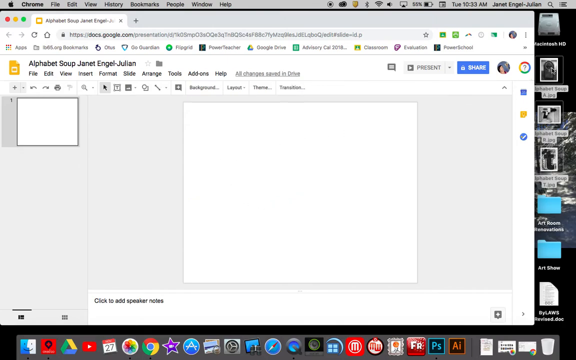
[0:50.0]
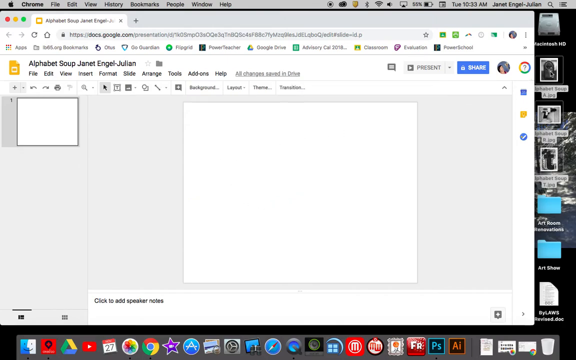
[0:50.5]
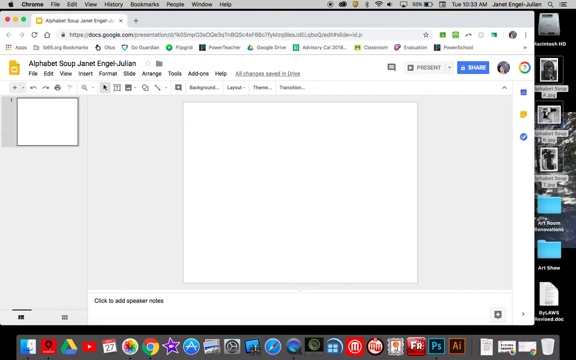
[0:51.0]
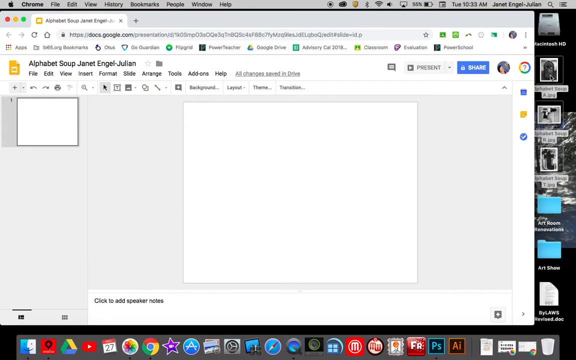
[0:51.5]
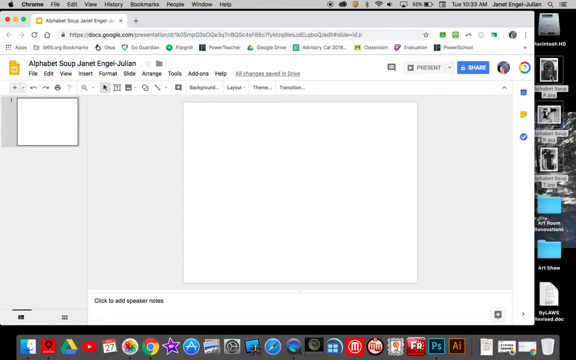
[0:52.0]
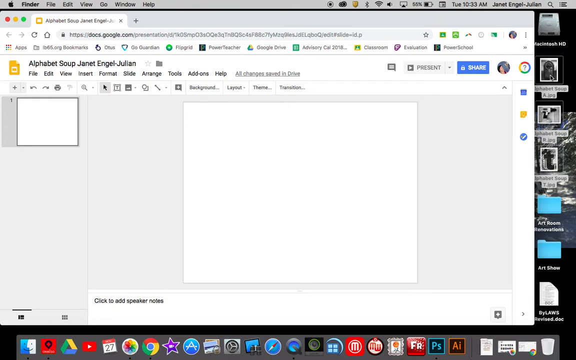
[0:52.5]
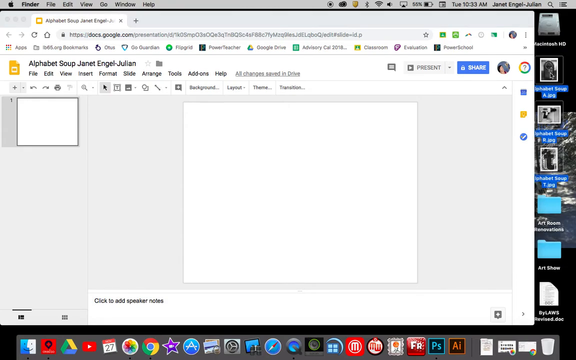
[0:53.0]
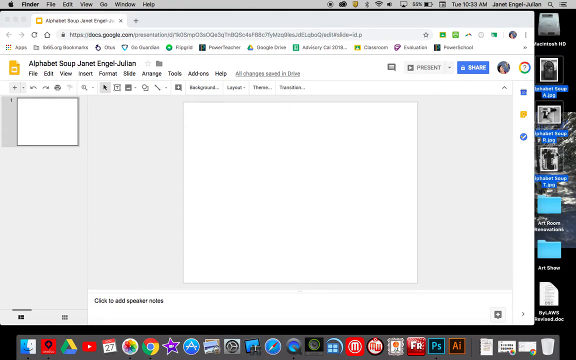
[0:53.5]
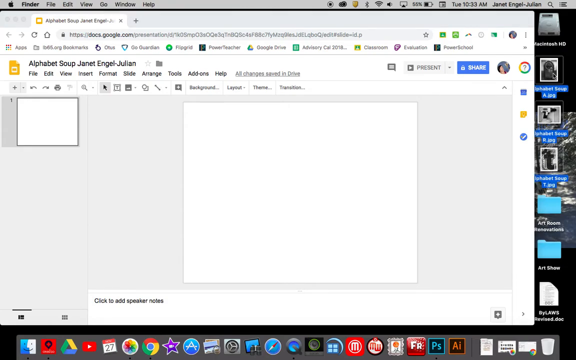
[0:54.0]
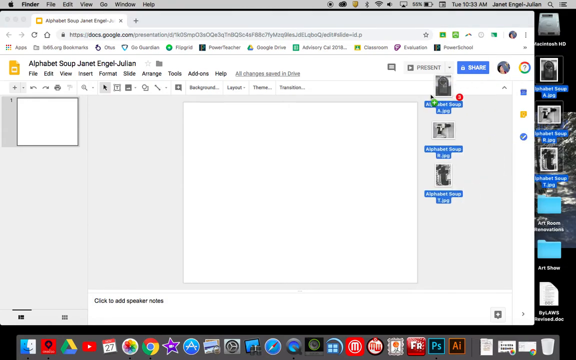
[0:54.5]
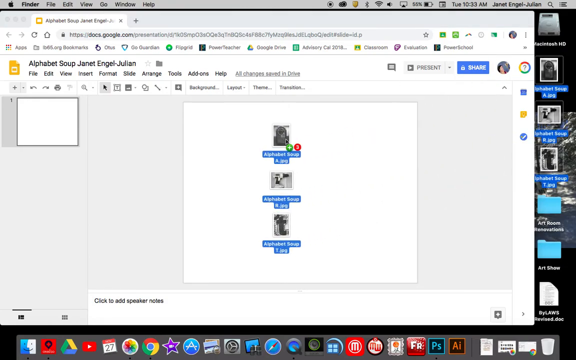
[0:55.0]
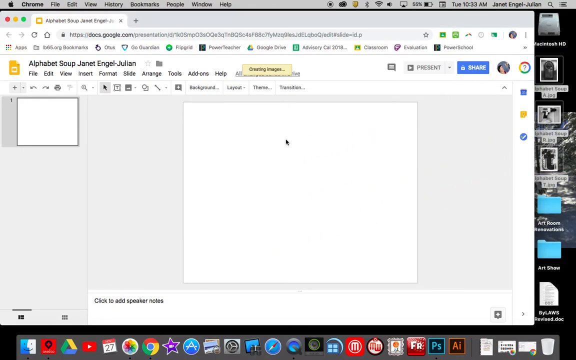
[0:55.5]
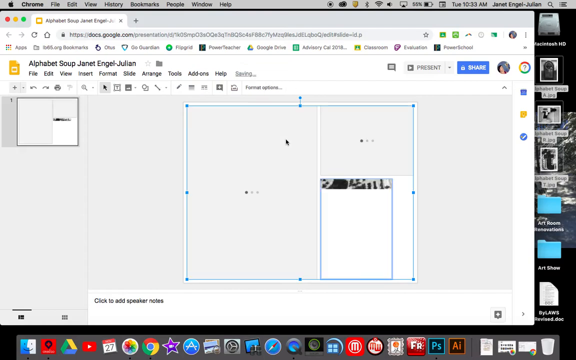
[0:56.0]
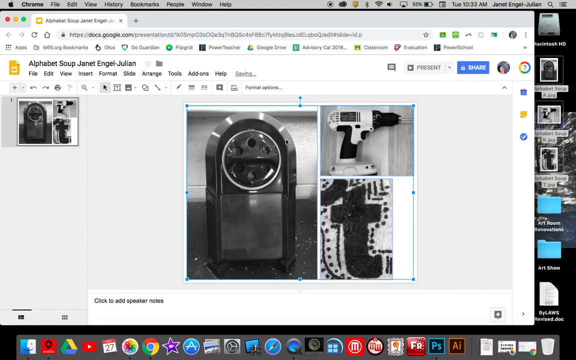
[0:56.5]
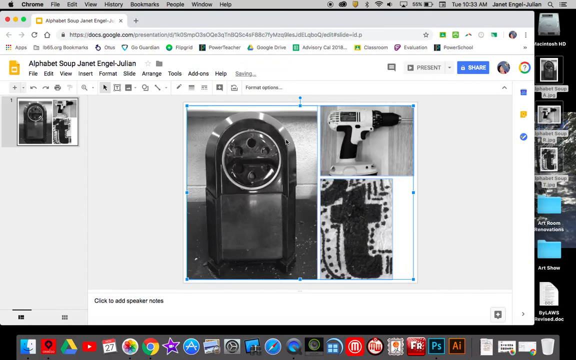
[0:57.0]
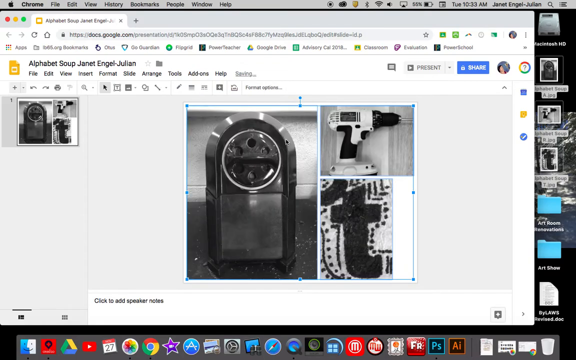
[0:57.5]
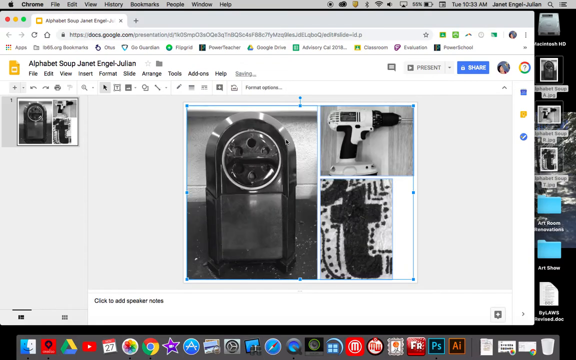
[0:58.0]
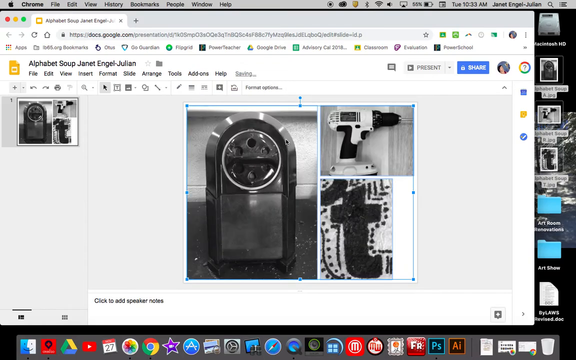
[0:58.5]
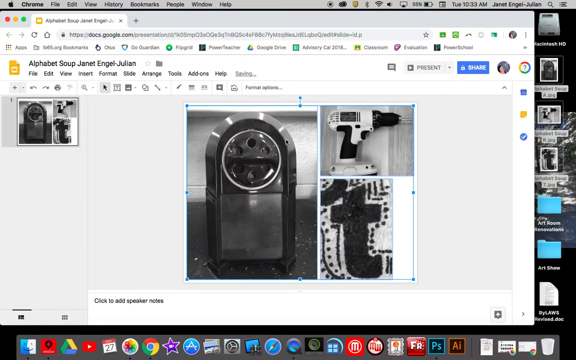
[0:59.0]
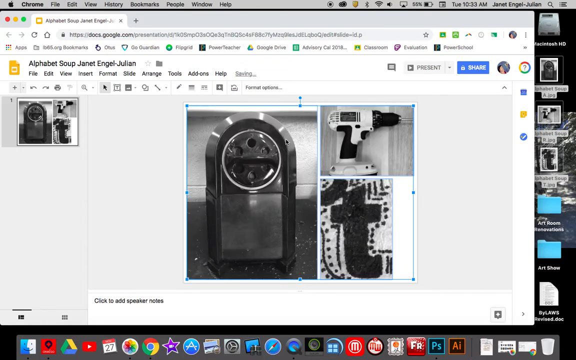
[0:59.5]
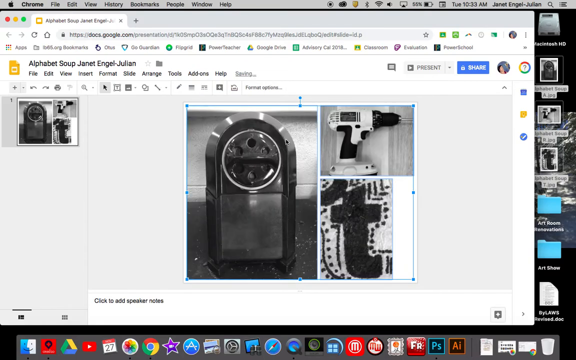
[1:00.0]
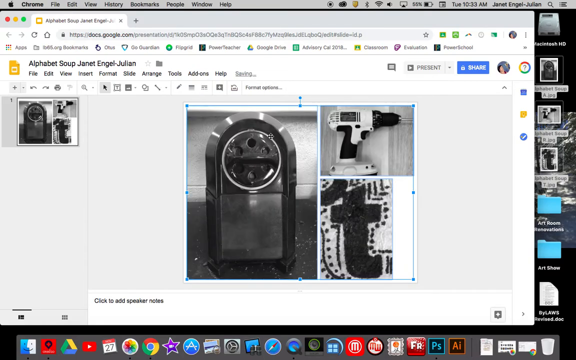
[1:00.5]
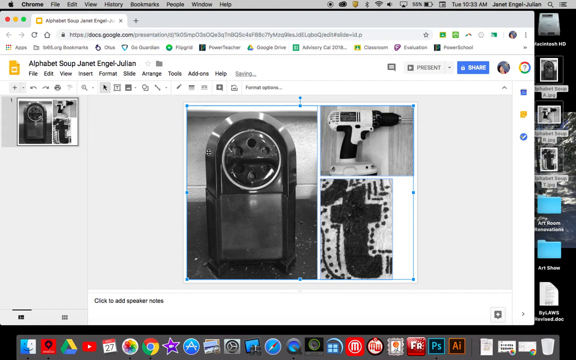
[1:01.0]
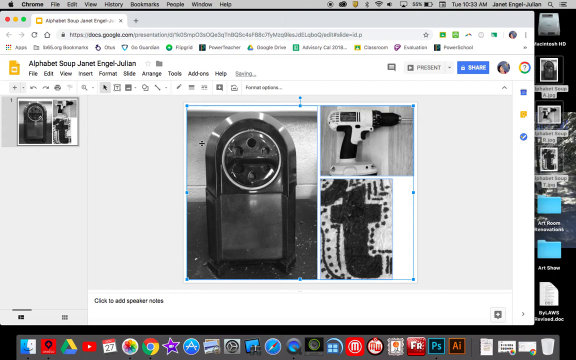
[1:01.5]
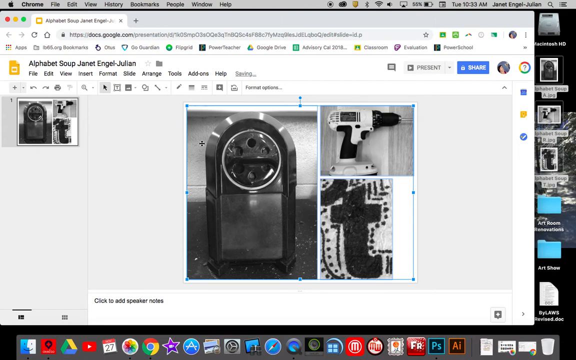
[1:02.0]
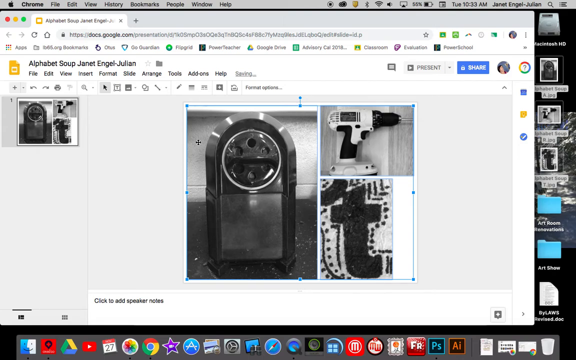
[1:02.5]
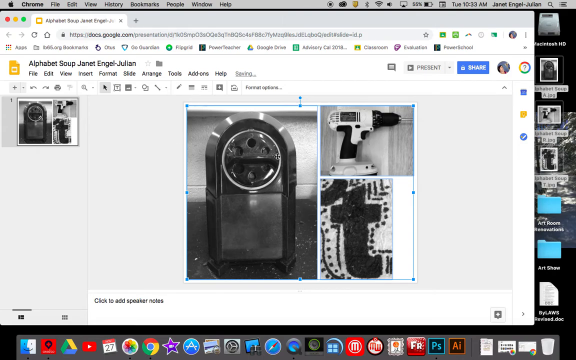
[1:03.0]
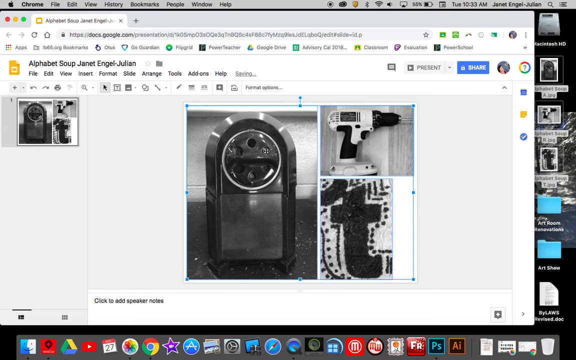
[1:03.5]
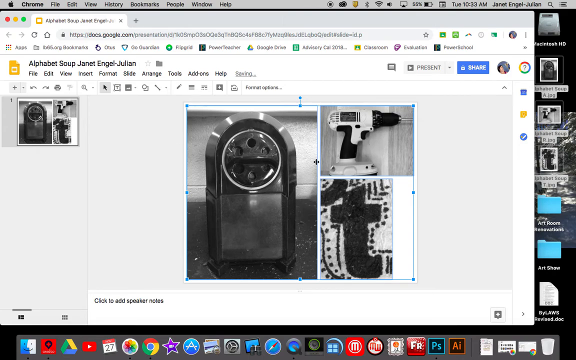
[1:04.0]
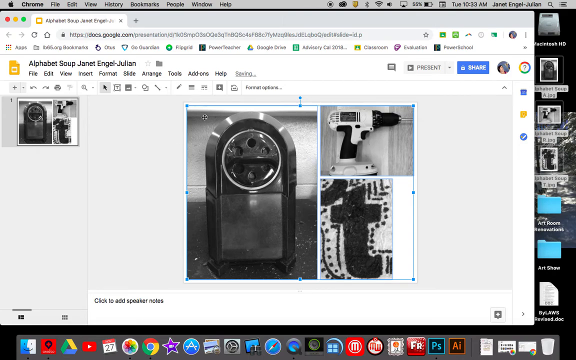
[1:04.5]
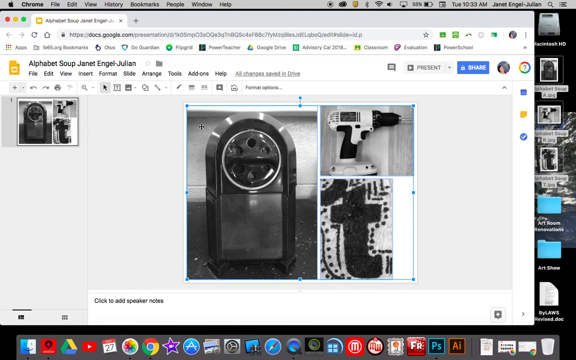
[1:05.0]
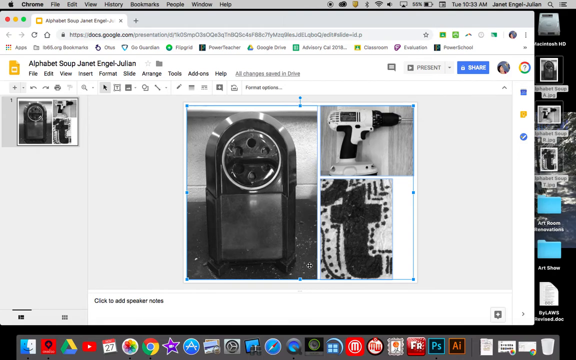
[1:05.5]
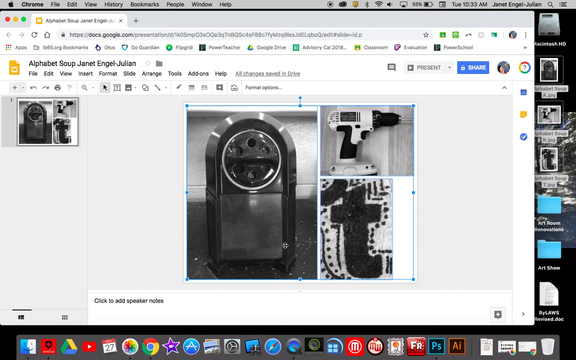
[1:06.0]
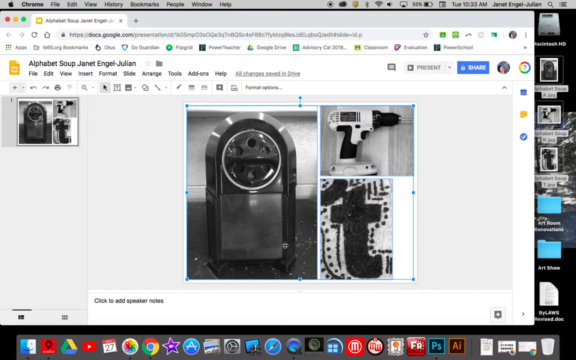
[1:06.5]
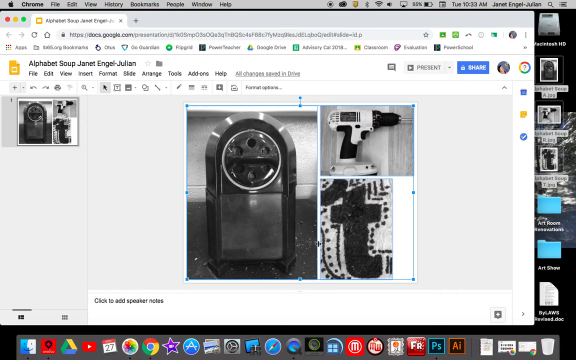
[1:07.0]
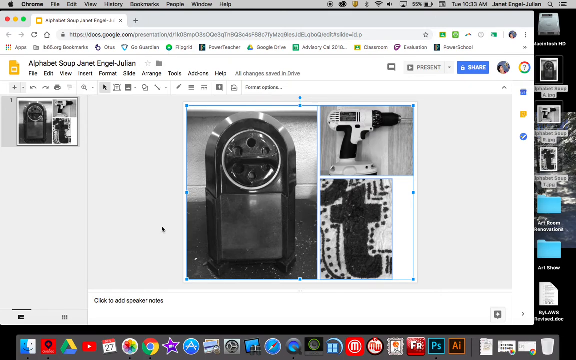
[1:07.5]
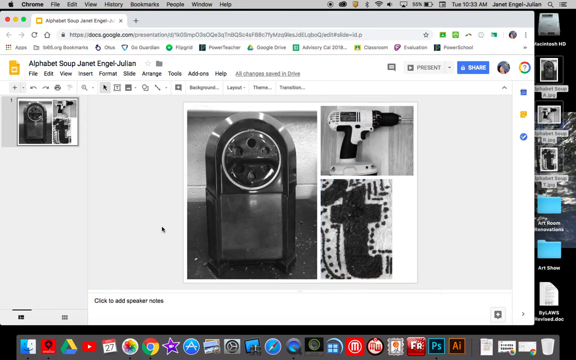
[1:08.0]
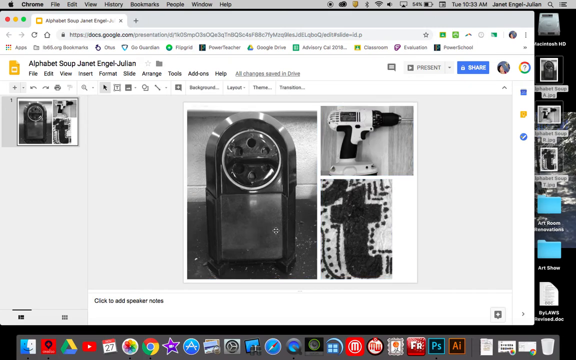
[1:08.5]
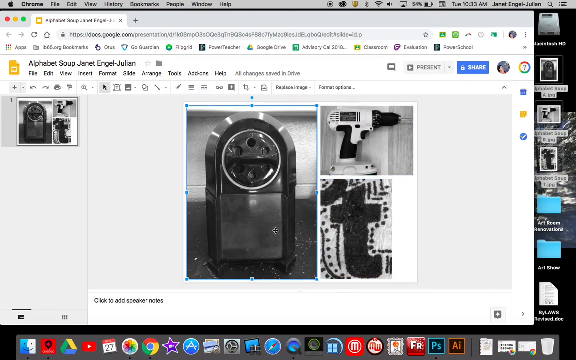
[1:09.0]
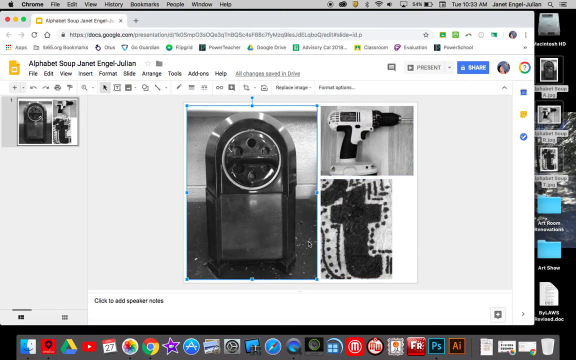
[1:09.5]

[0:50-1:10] The Apple logo is in the top left corner, with a white Google Docs page open in the Chrome browser. The user's mouse is off to the right of the browser page on the desktop background, hovering over a black and white image. The user clicks on three items arranged vertically on the right side of the screen and drags them onto the Google Docs file. The three items are added as images next to each other in the middle of the screen. One is a circular item with an oval shape, a circle with holes in it at the top, and a twist knob in the middle of the holes. Another looks to be an electric screwdriver. The third is a black letter T, possibly embroidery, though it is hard to tell from the image. Each image has a light blue box around it, and a larger box surrounds all three. The user hovers over the leftmost image, makes vertical and horizontal mouse movements over it, clicks off the images, then clicks on the left image, and light blue lines appear around its edge.